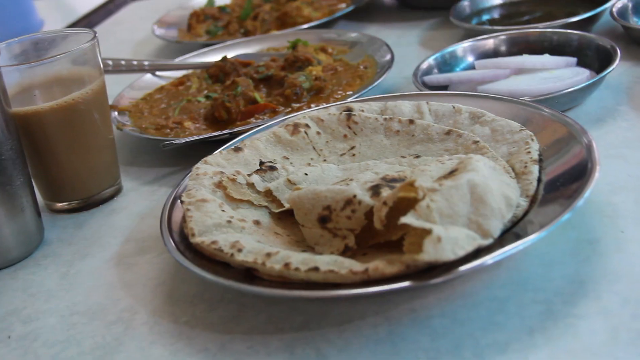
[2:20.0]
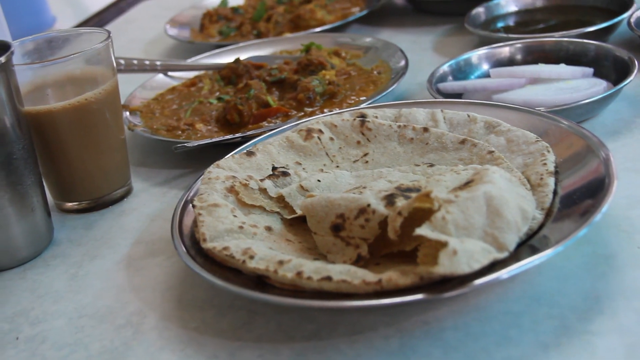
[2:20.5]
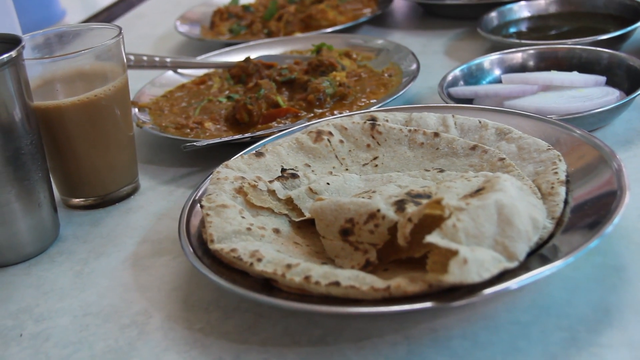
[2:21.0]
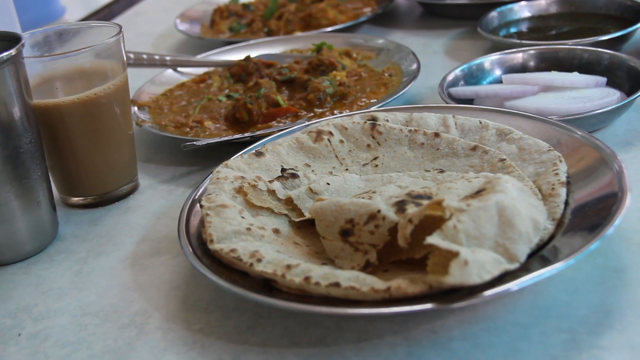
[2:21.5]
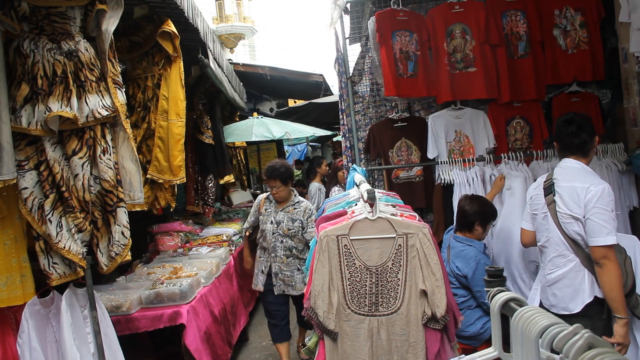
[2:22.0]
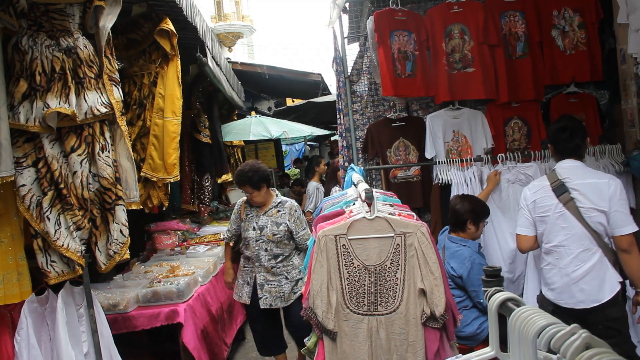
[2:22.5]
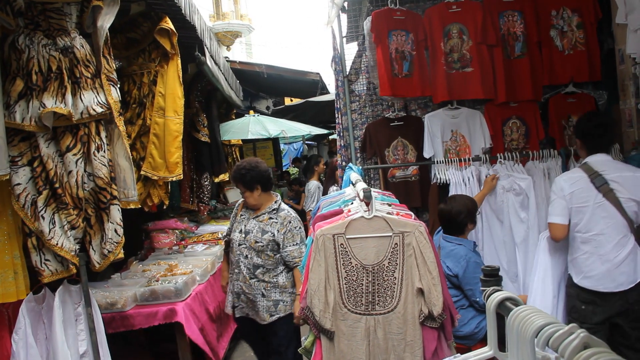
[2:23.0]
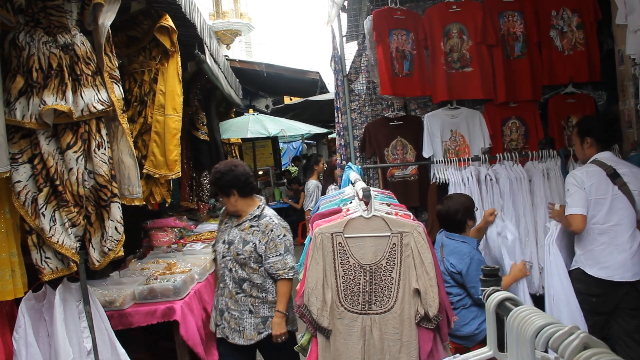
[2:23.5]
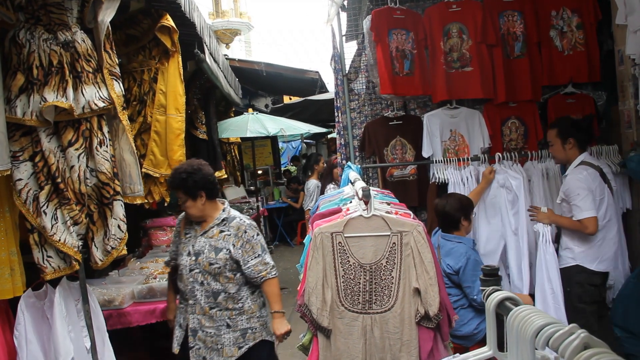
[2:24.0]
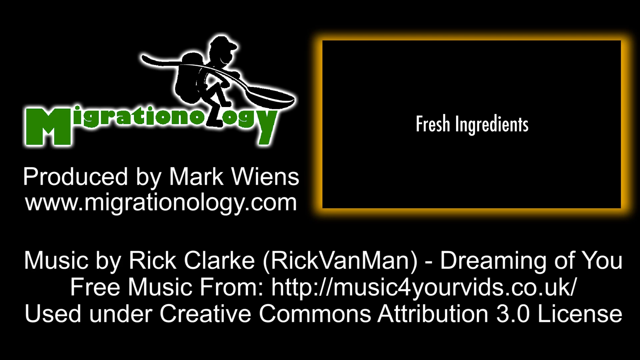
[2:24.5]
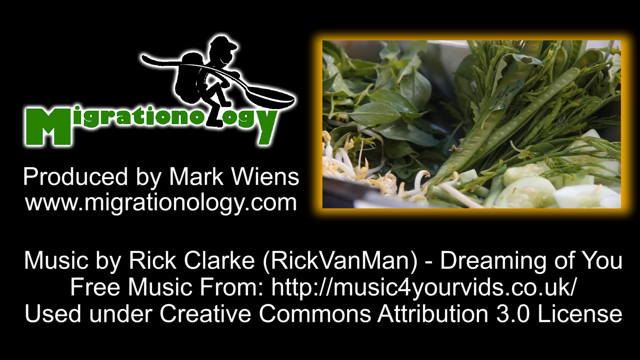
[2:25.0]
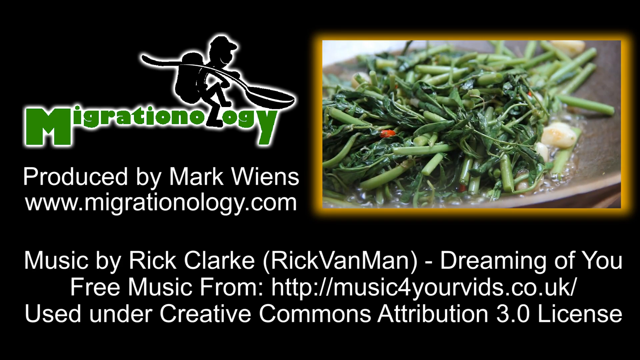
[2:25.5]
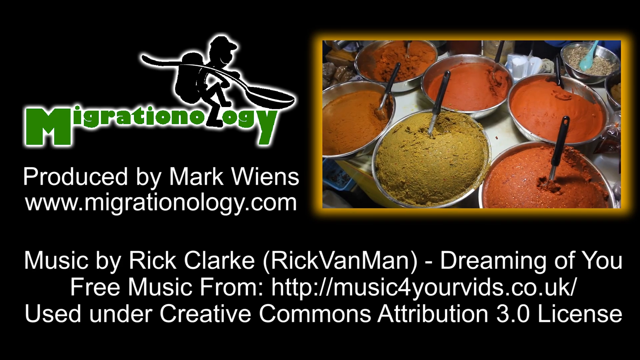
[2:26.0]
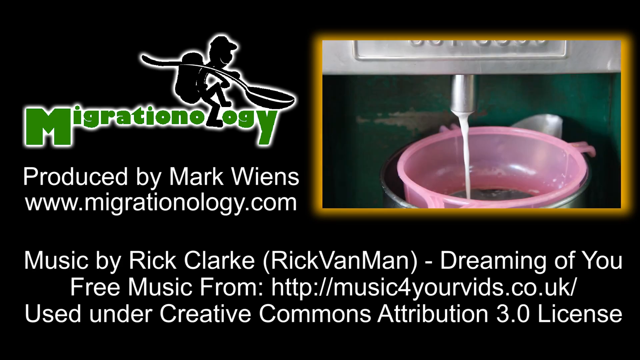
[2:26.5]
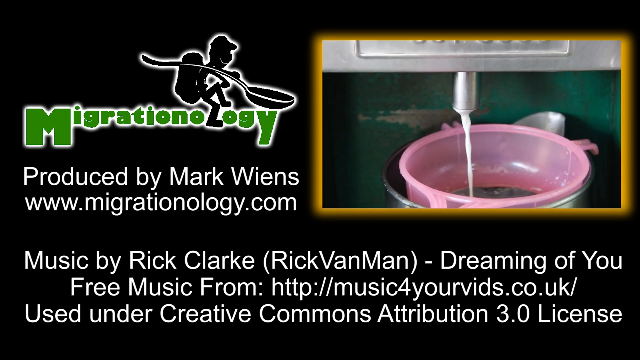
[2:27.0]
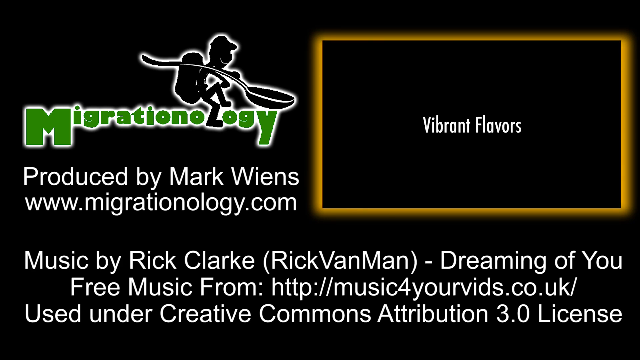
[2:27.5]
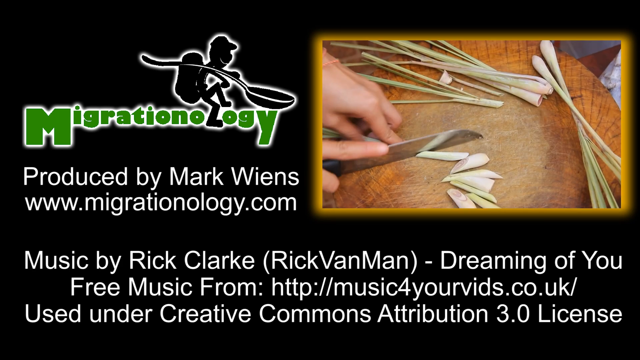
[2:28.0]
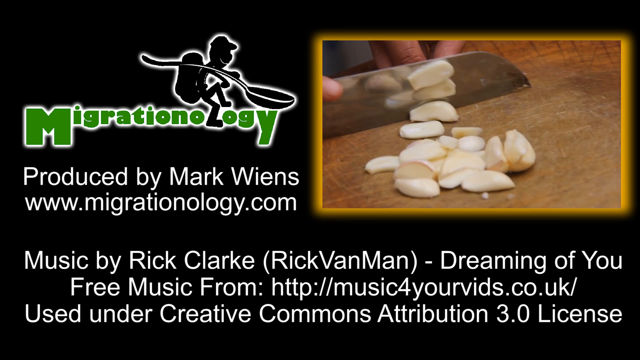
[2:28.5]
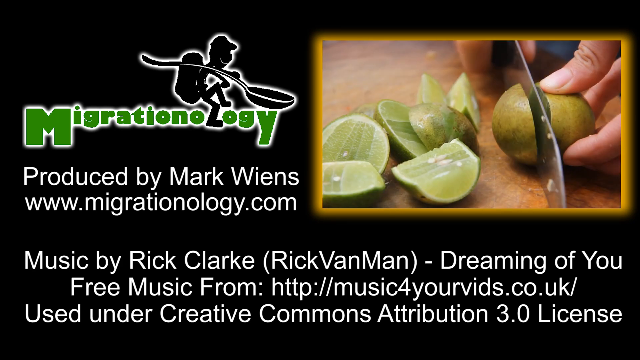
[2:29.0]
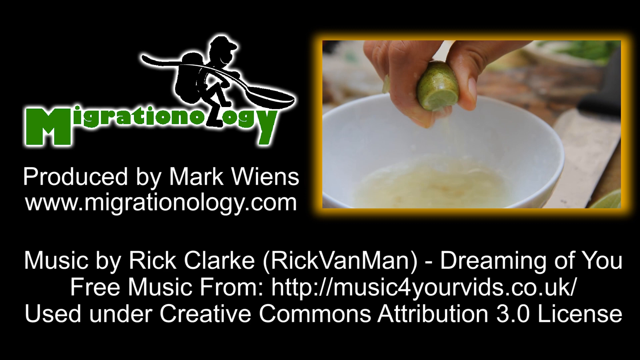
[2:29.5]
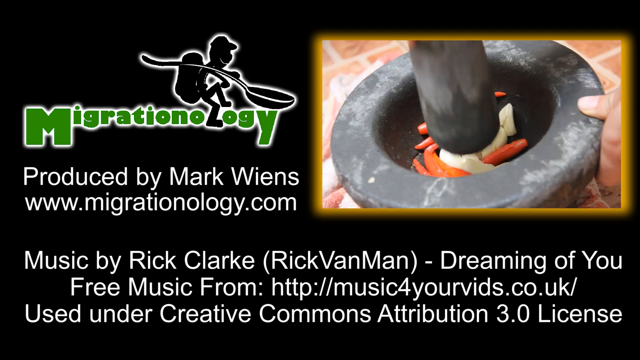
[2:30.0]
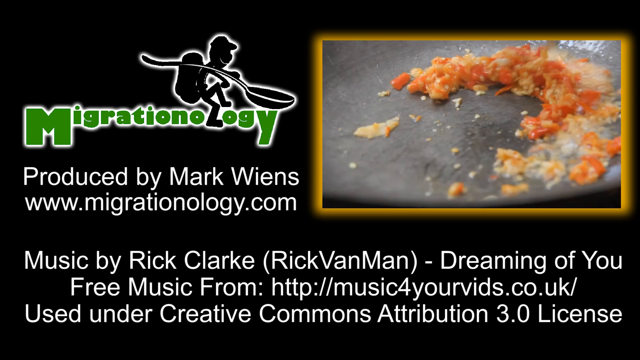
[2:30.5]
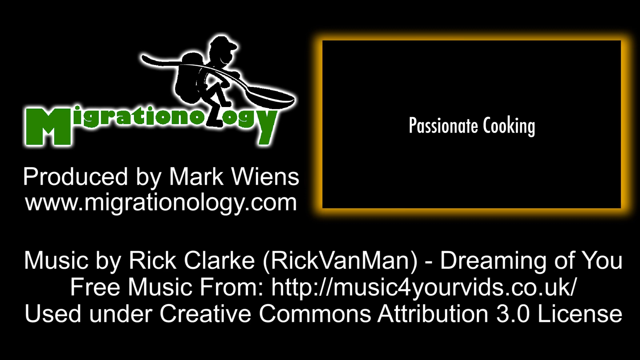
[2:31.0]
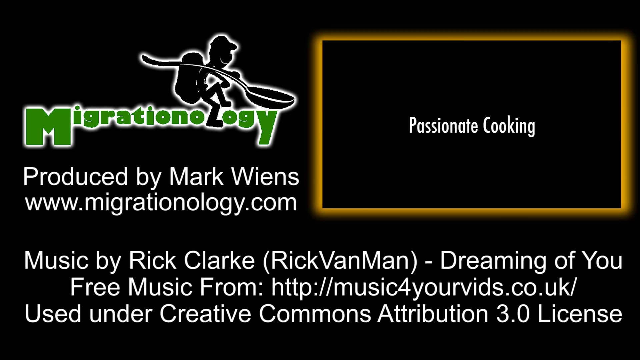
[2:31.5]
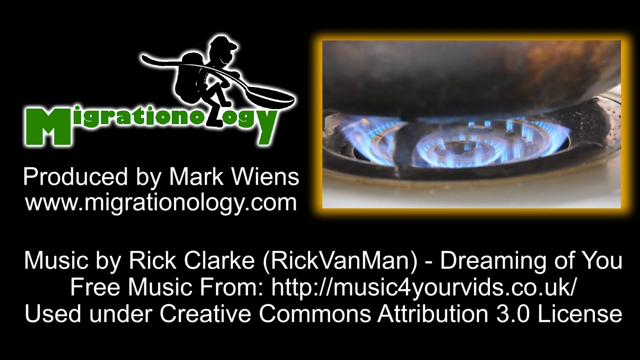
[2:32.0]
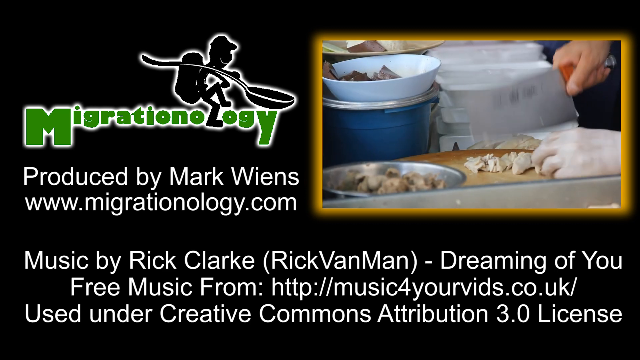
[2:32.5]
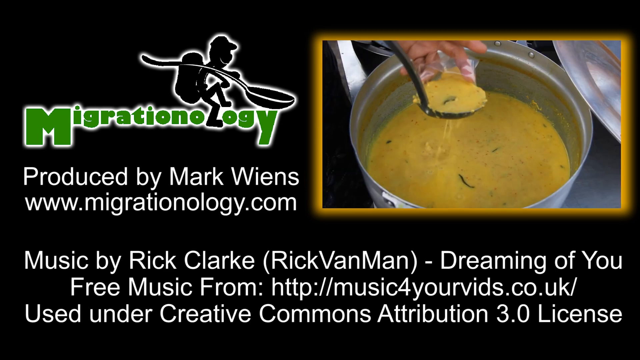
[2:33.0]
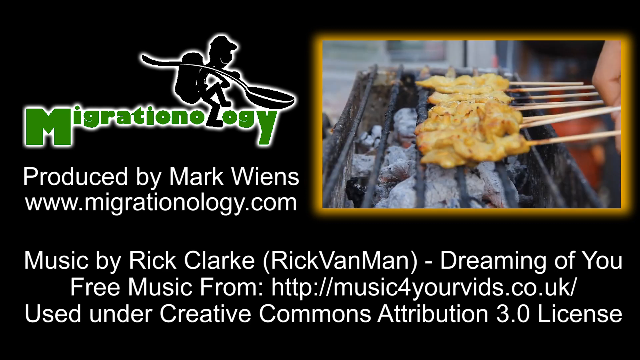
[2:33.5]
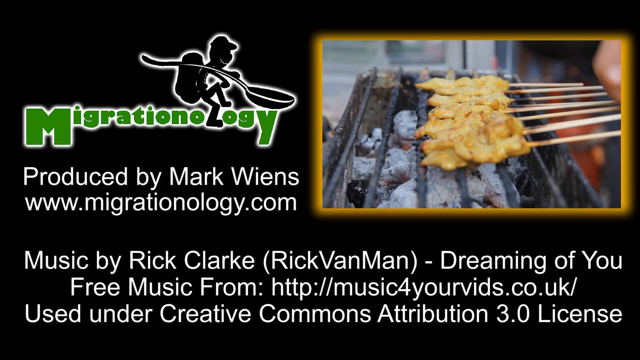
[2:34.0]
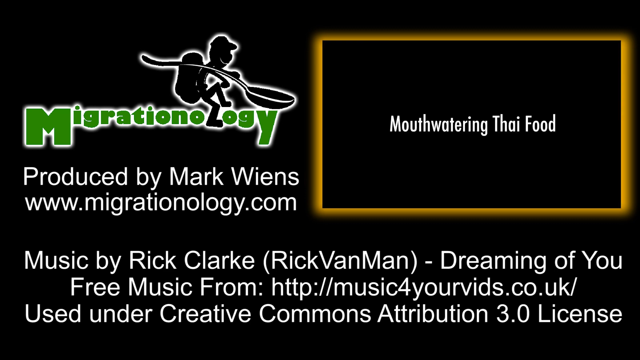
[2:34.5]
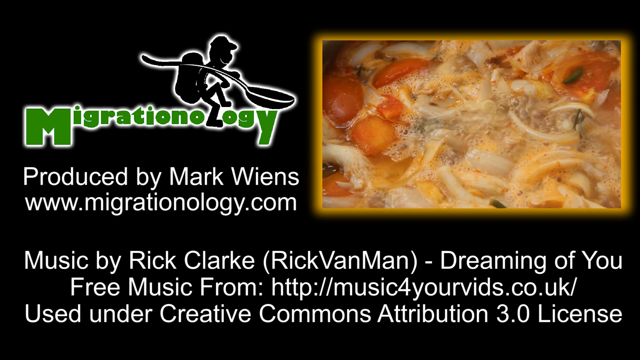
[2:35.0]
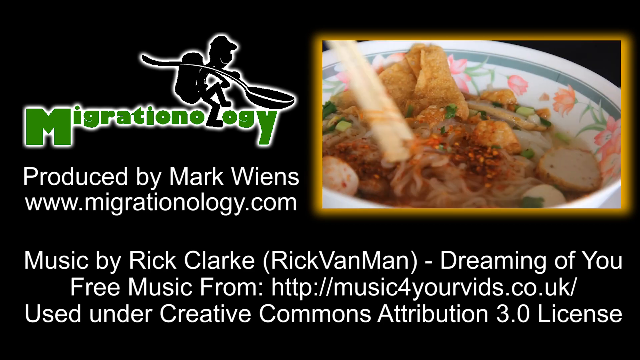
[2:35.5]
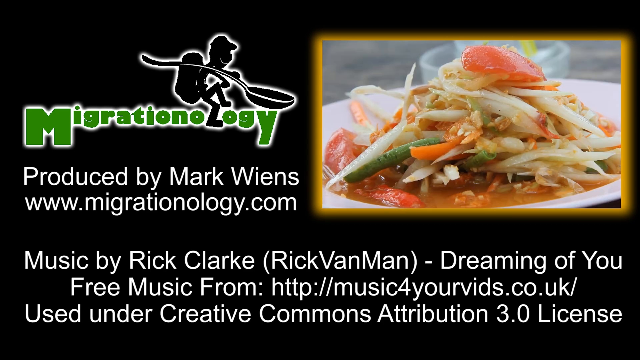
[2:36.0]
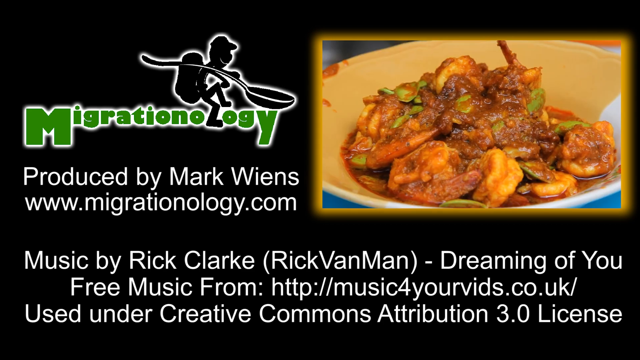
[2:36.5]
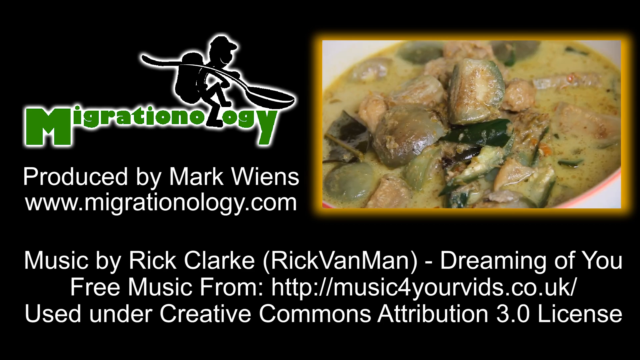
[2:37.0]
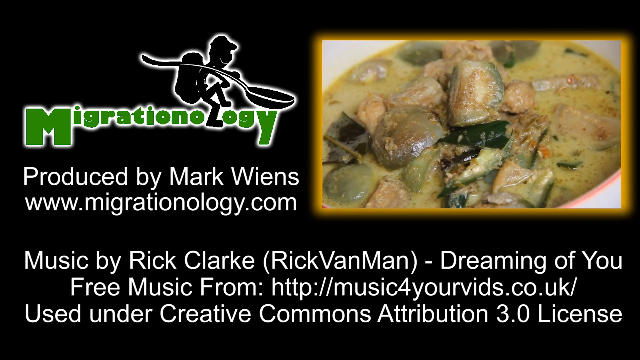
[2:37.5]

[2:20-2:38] A final shot shows the man and his food, followed by the marketplace, then his logo with a video in the upper right corner that is like a trailer for his YouTube vlog, seemingly about Thai food. It shows vegetables being chopped and food being sautéed, with lots of spices on all the food, and on-screen text says something like "mouthwatering Thai food". Text at the bottom says "music by Rick Clark, dreaming of you", along with a link to where the free music was found.